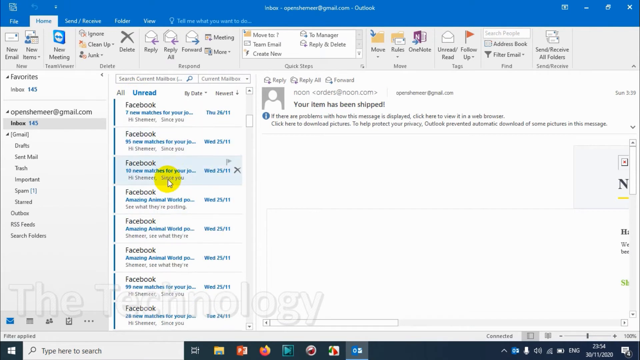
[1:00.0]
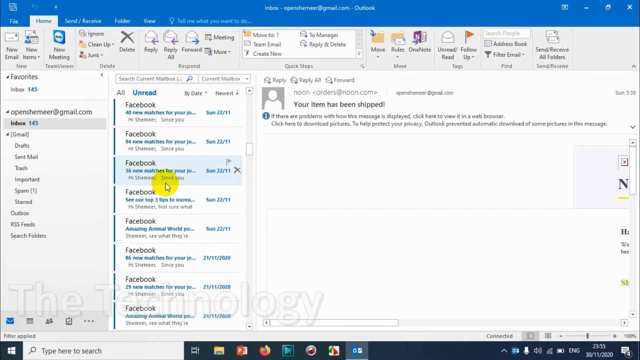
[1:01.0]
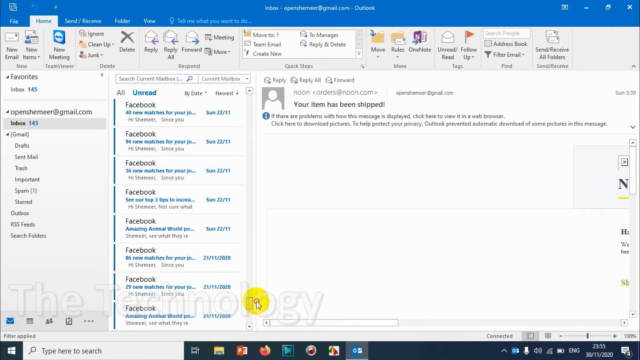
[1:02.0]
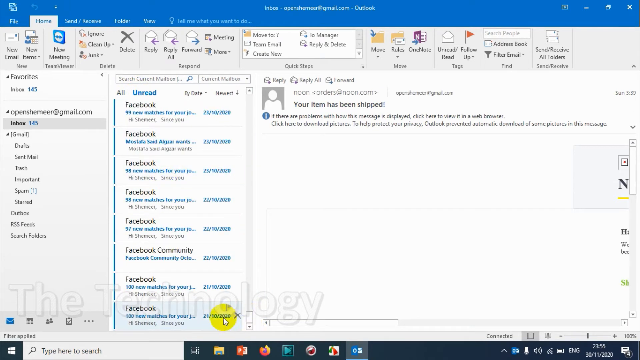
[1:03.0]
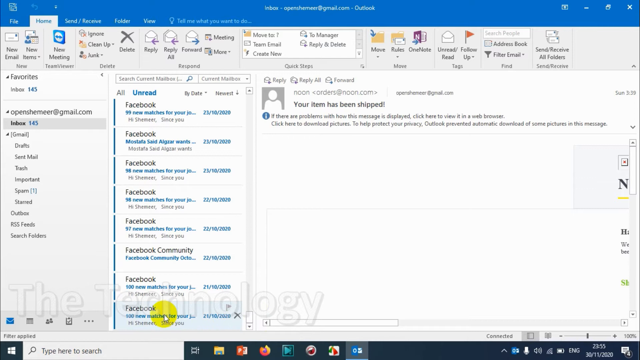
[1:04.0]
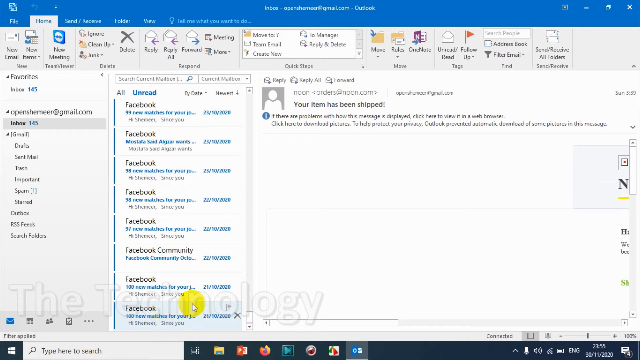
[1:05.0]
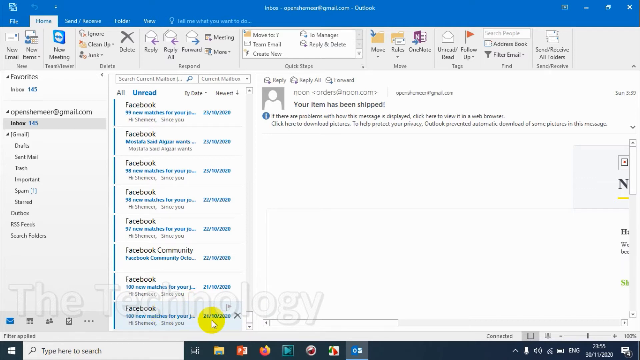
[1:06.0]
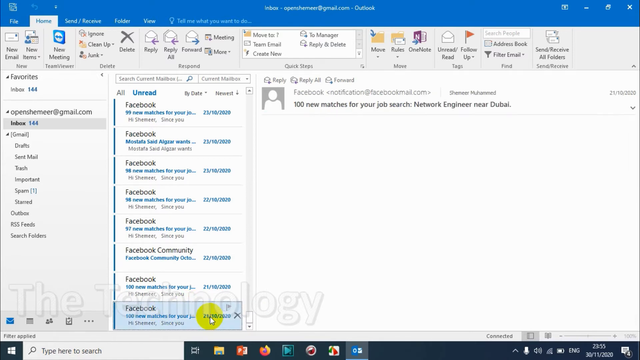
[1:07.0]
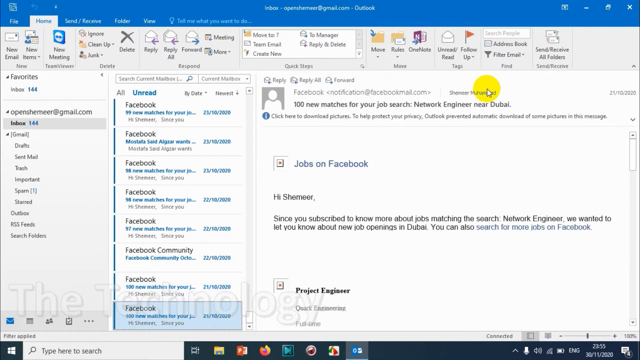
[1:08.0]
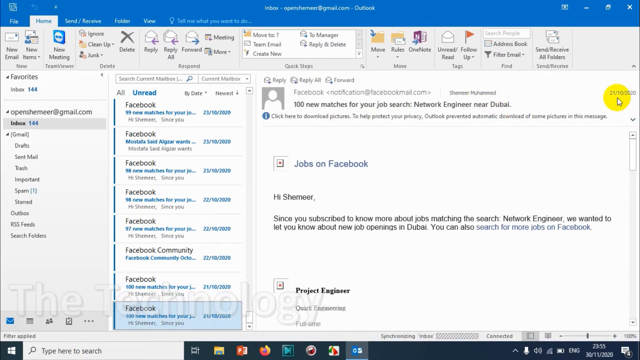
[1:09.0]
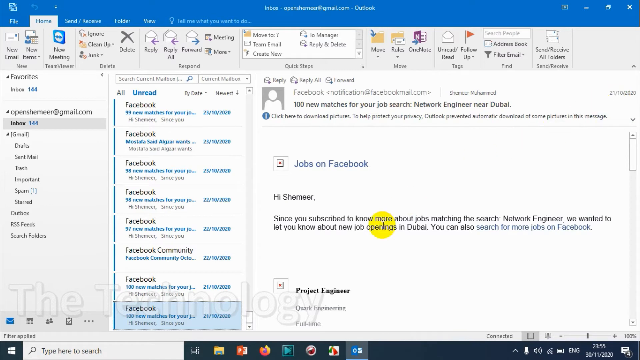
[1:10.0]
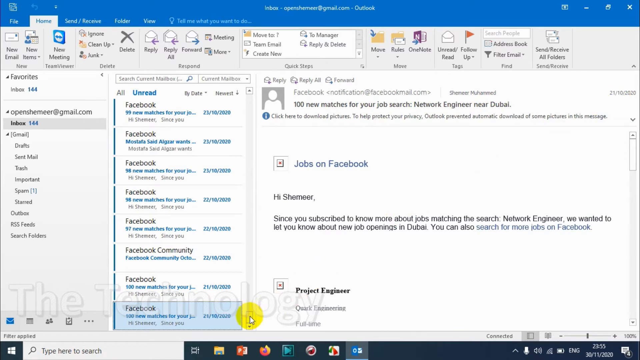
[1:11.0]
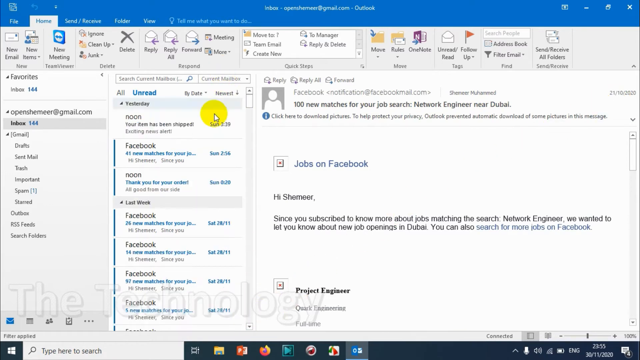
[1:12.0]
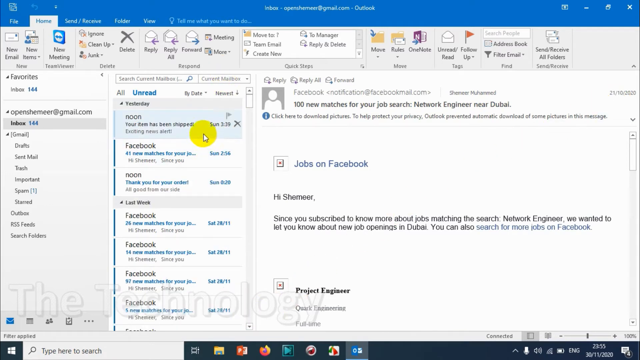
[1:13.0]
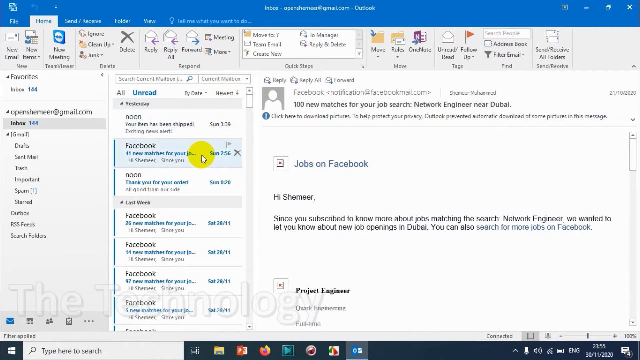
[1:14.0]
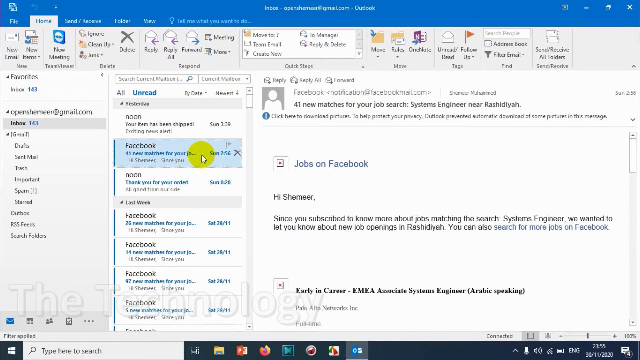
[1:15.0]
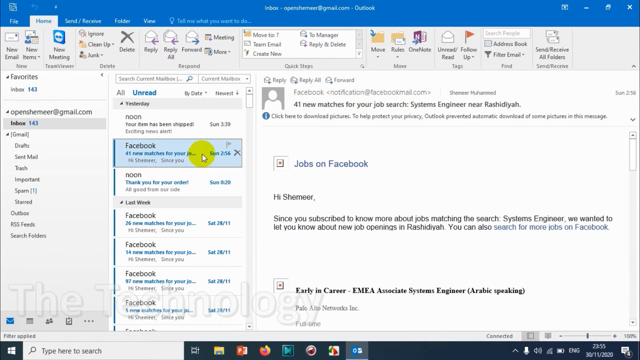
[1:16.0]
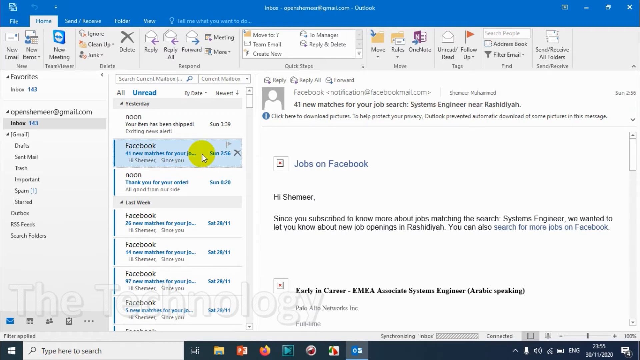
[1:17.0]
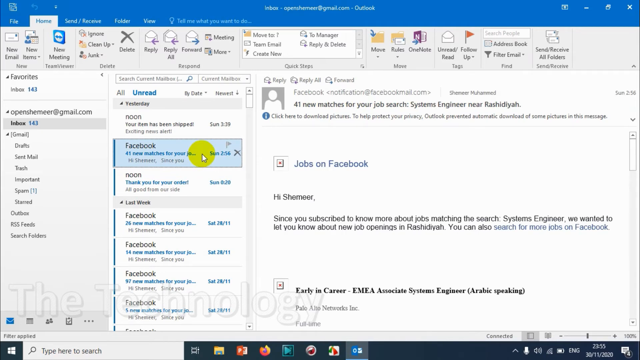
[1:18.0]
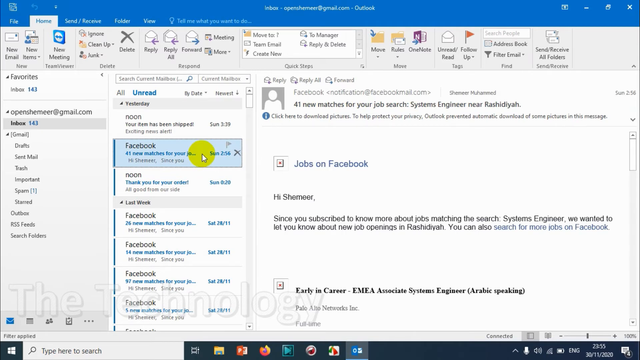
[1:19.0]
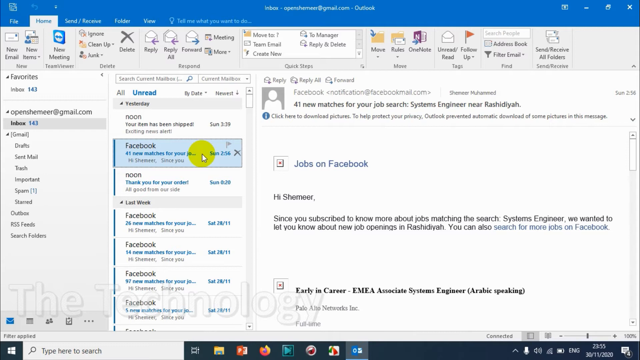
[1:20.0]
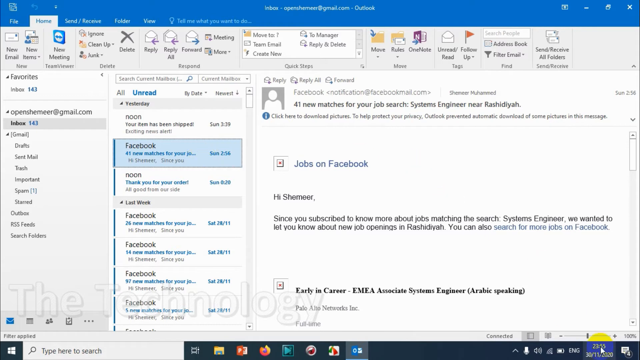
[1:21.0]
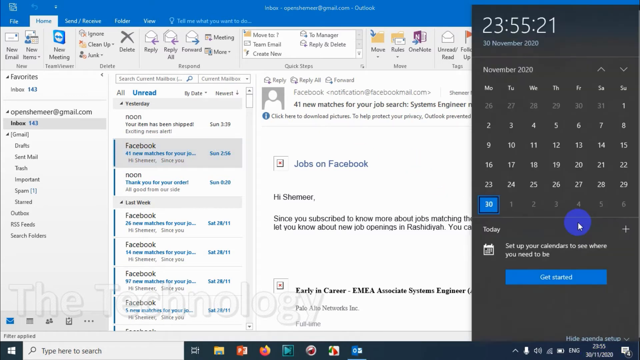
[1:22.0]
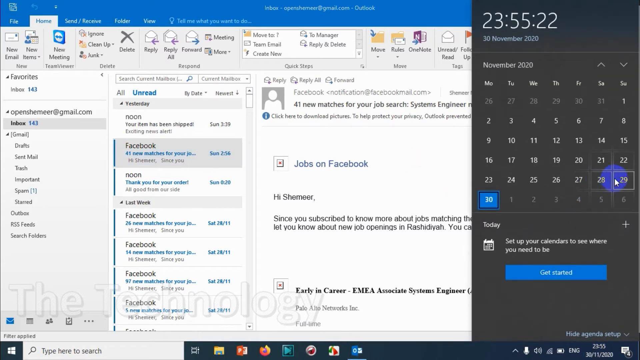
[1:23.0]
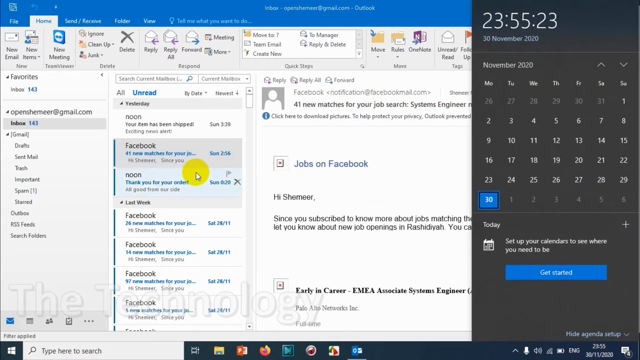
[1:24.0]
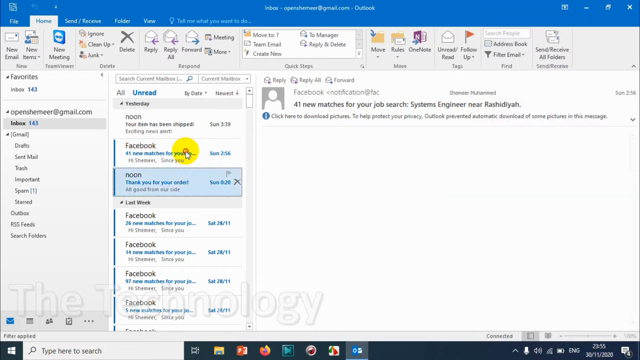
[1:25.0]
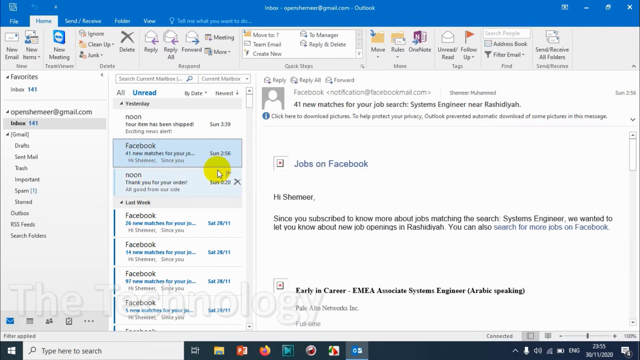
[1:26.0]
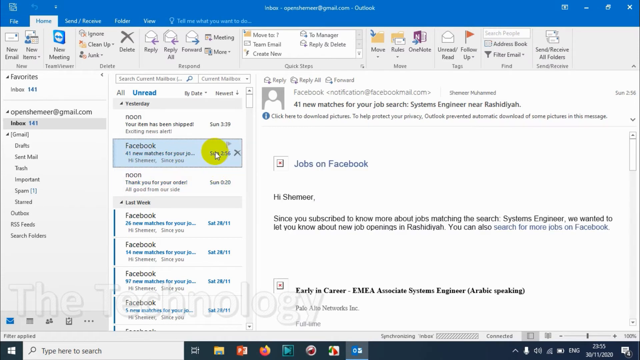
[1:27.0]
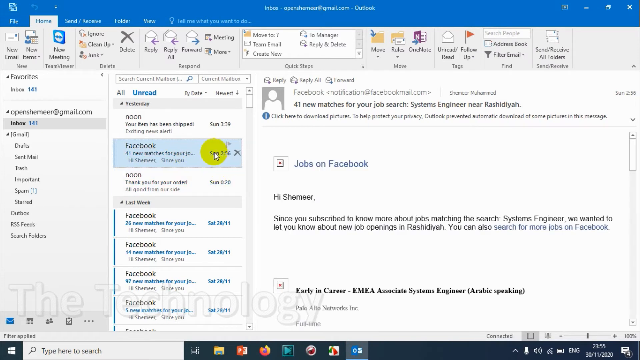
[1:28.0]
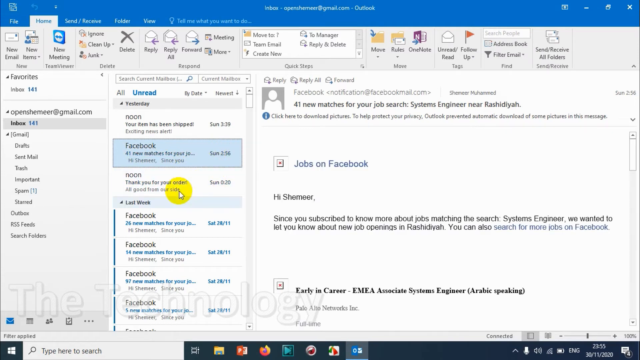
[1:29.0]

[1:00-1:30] A landing page looks like an Office Outlook page showing what looks like a Gmail email account. The yellow pointer starts on the third email. The mouse scrolls through, moves to the bottom of the screen, stays there, and finally clicks an email at the bottom. The email comes up; the mouse moves to the right, then back to the emails in the center, and opens a second email that says "Jobs on Facebook." The mouse moves to the right and opens a calendar screen, closes it, comes back to the emails, clicks an email, moves down, clicks another email, and then rests on what appears to be the third email in the account.